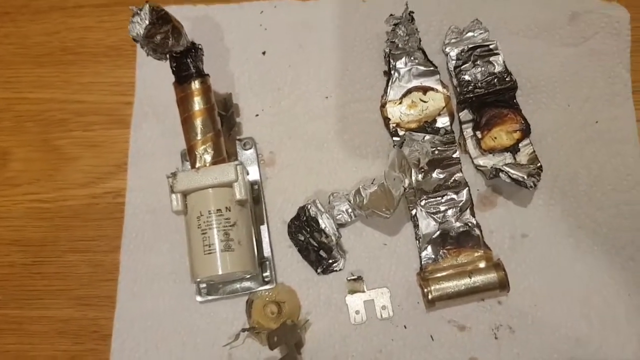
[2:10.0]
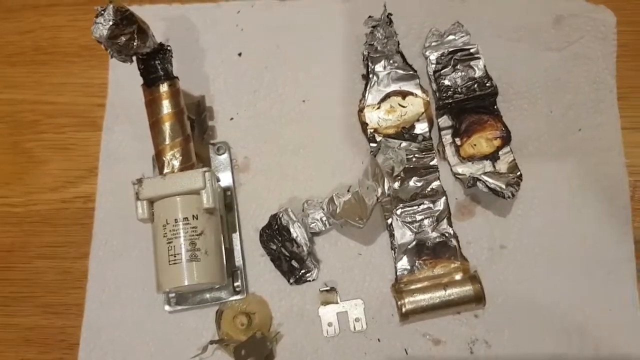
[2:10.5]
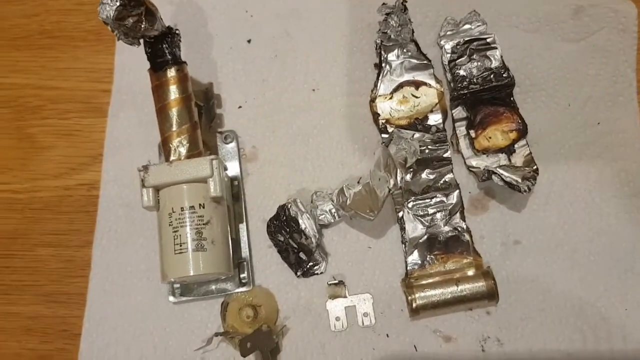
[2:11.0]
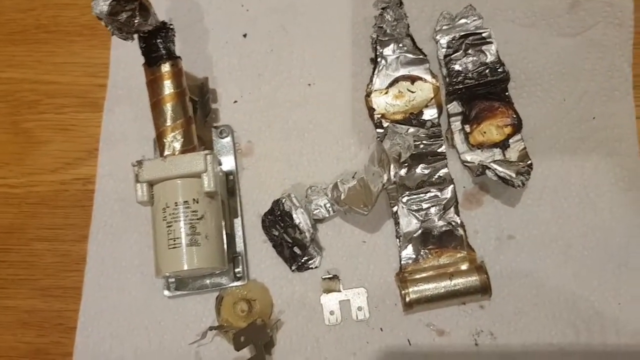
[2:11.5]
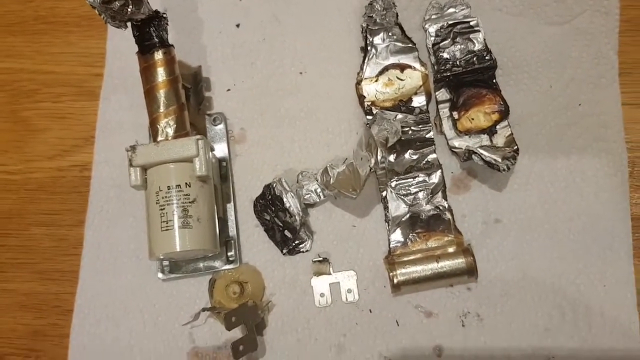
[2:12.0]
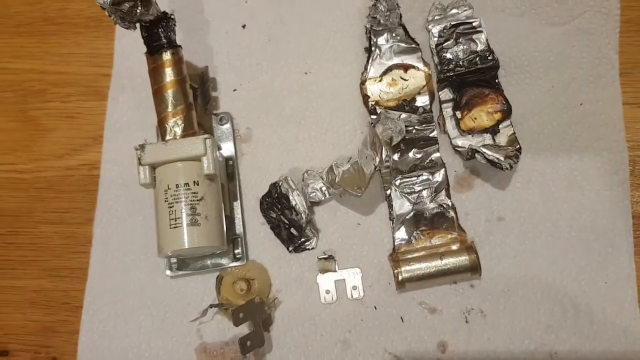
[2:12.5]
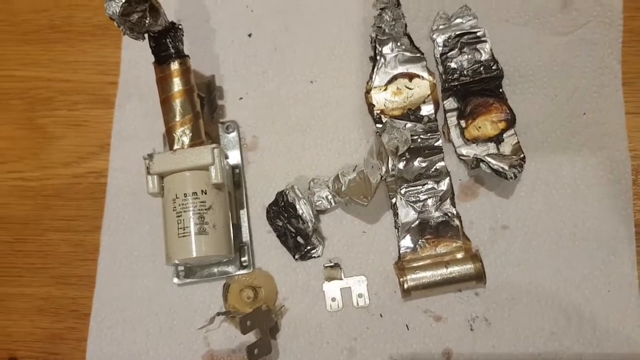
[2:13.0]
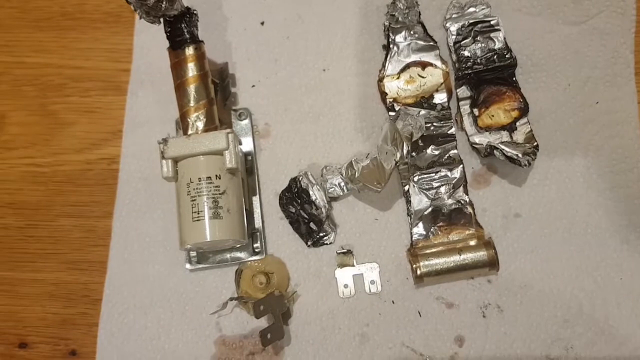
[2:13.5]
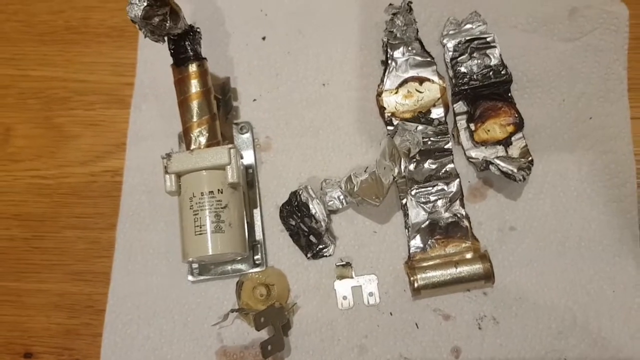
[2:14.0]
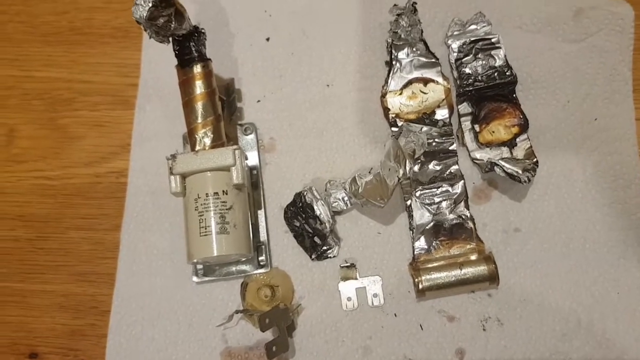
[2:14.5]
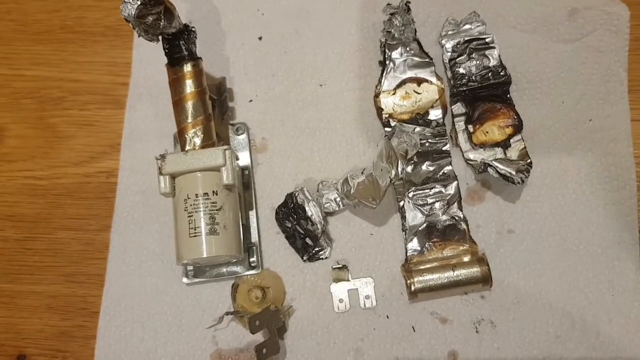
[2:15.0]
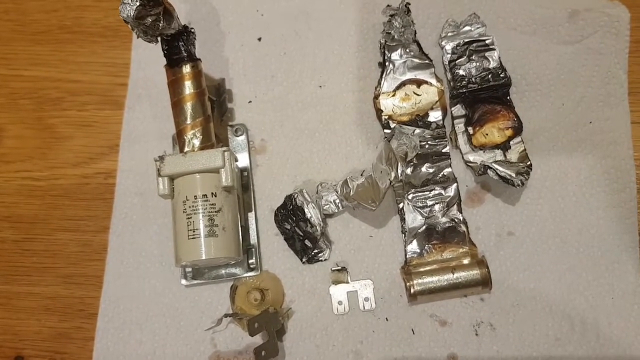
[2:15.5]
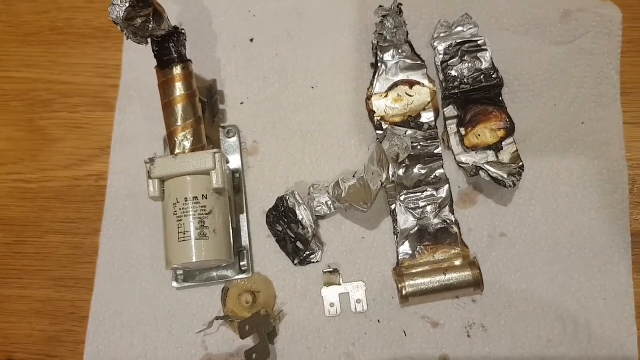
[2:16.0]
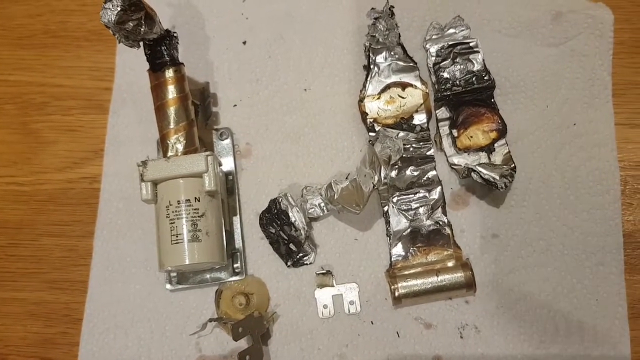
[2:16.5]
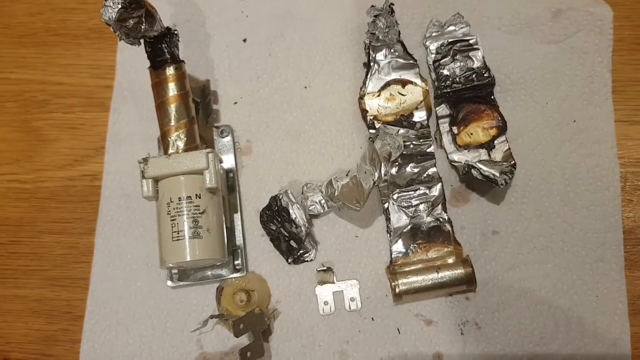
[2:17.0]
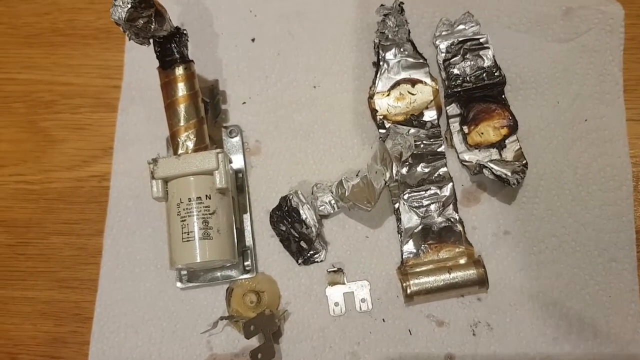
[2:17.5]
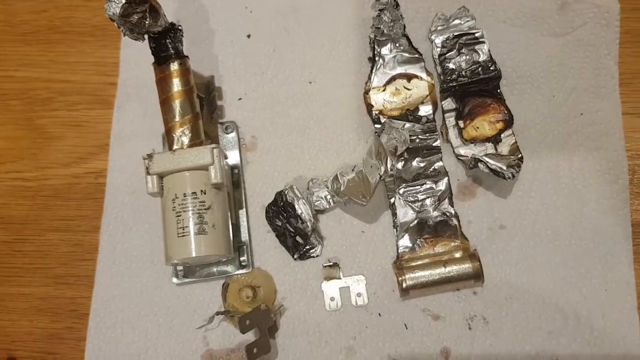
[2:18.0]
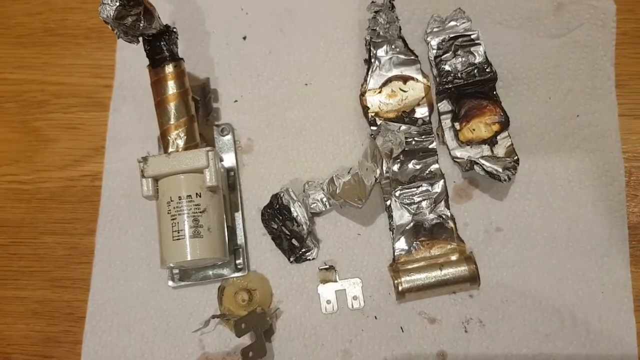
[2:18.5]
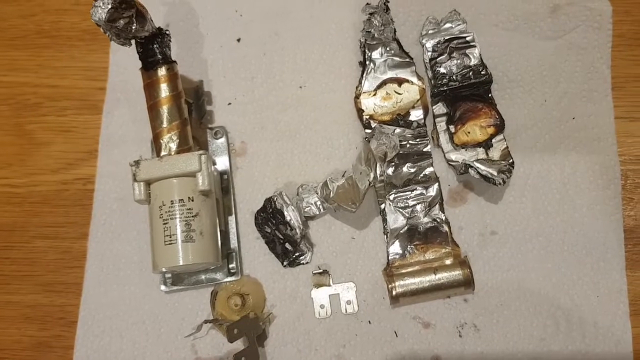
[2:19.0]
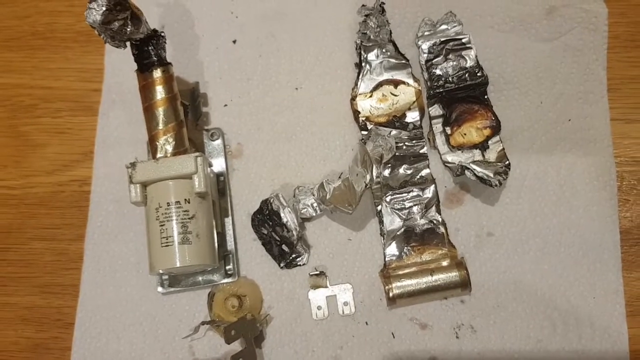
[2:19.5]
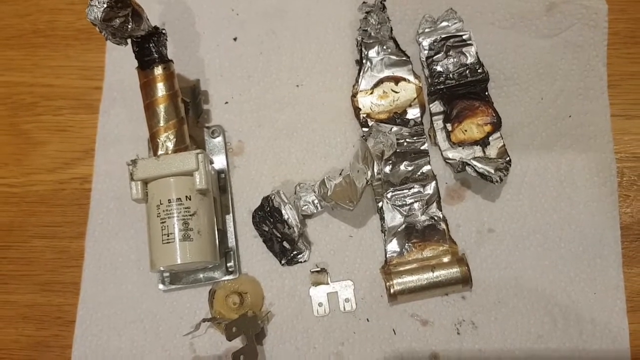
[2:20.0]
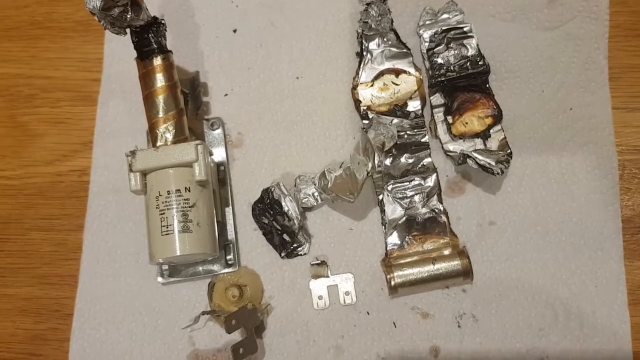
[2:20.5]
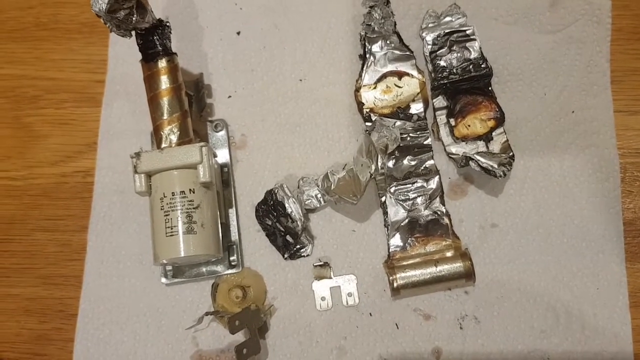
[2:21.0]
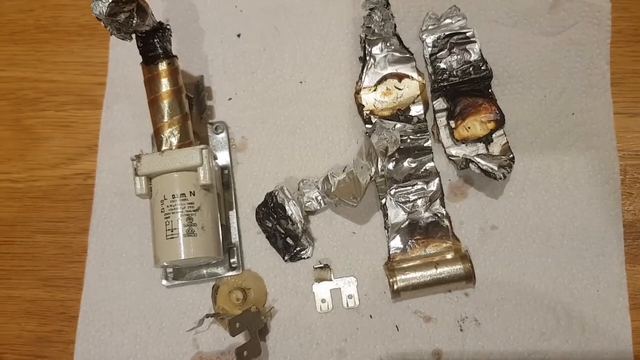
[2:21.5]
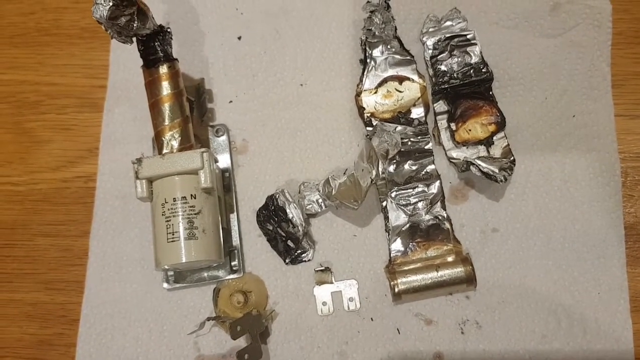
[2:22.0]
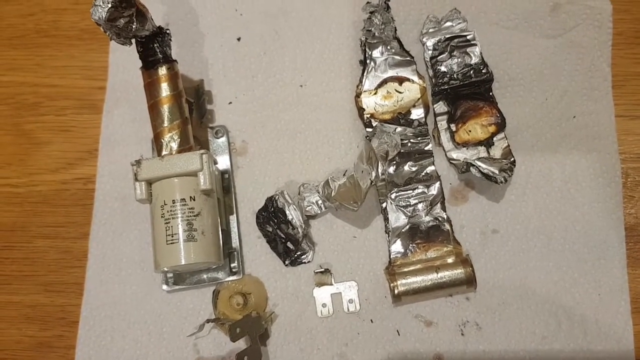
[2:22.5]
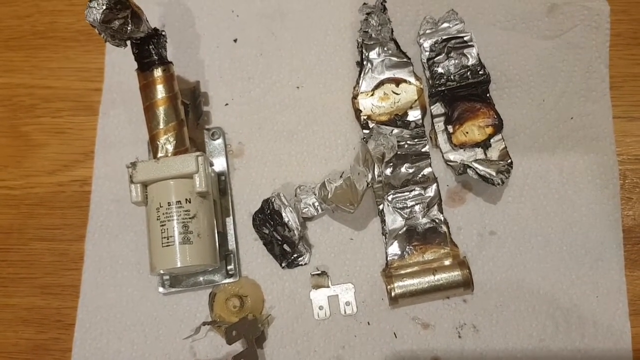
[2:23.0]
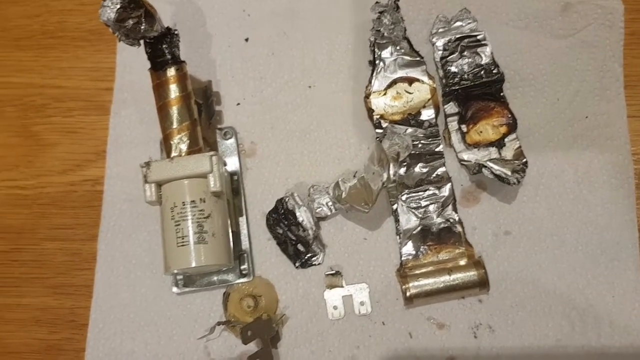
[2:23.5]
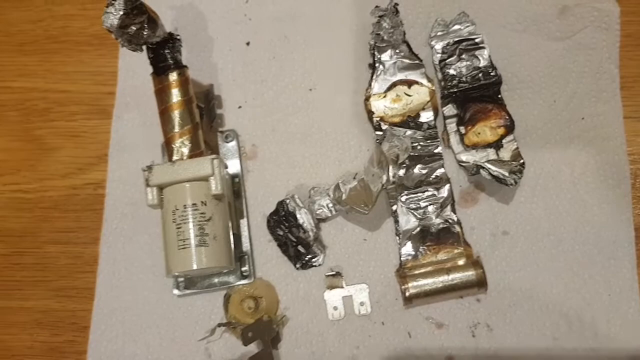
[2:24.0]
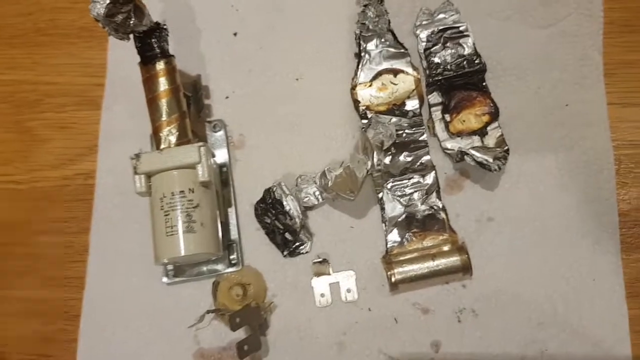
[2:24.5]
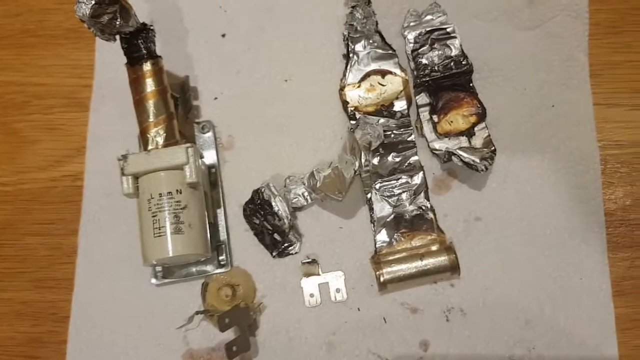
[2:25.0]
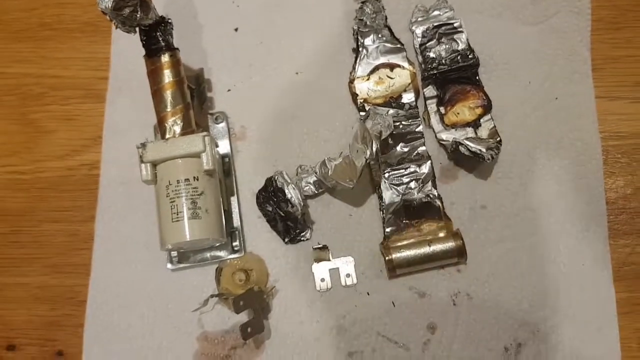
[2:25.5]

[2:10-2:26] All the components are still on screen. The camera moves forward a little and is very shaky, probably handheld, moving around a lot and bobbing to the left and right. The person's shadow is visible on the white paper under the components, moving quite a bit, though the person's hands are not in the frame. The white paper with the components is on a light wooden table, and the grain of the wood is visible behind the paper.